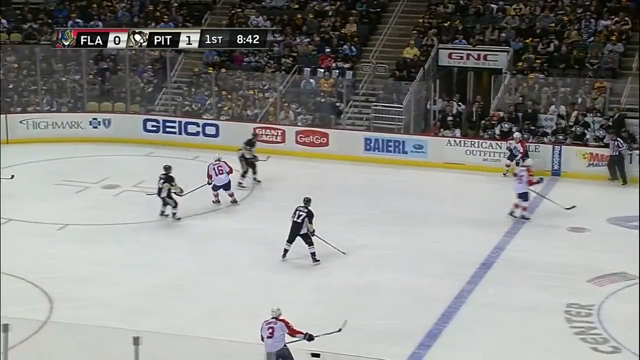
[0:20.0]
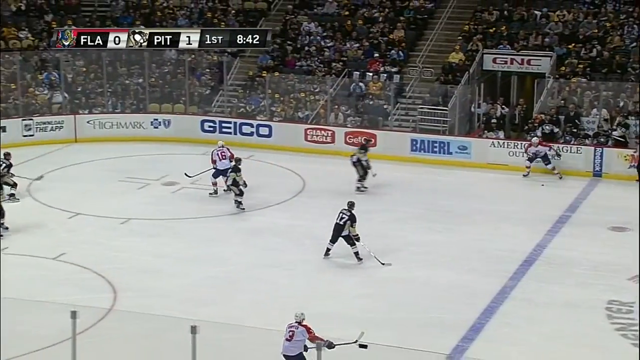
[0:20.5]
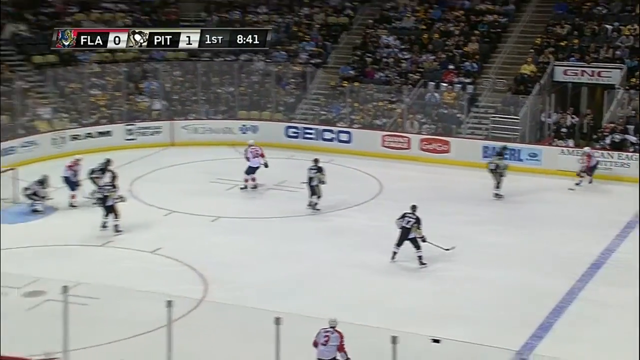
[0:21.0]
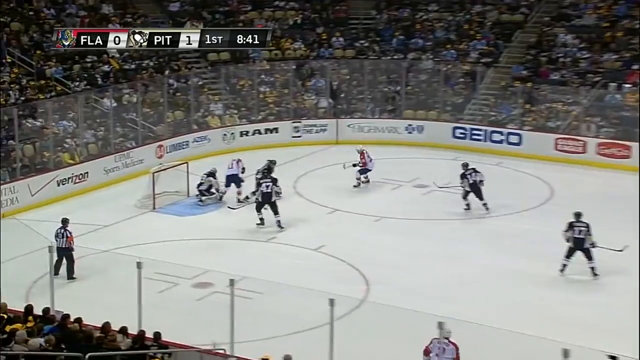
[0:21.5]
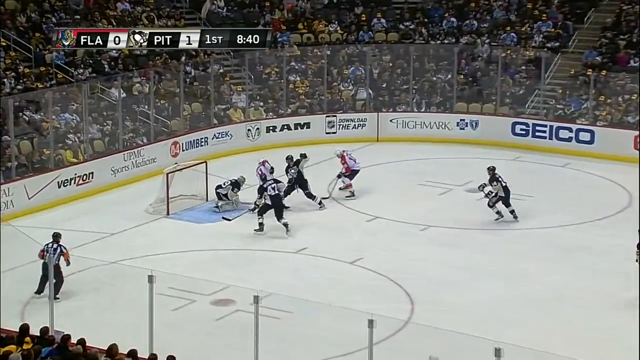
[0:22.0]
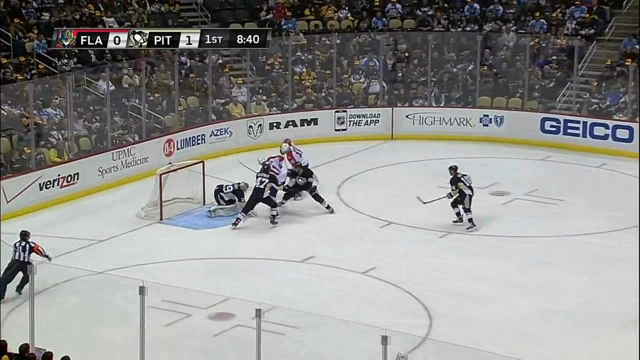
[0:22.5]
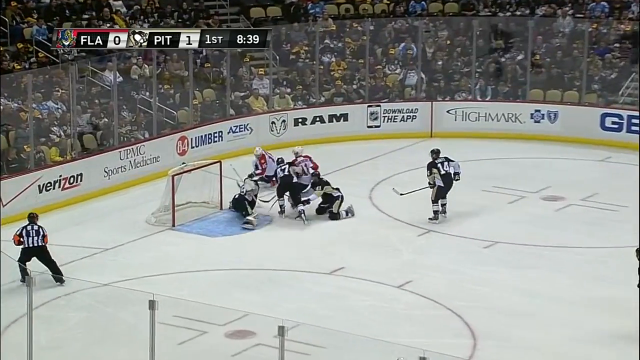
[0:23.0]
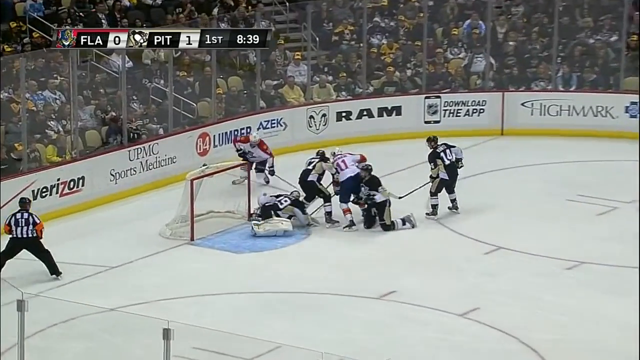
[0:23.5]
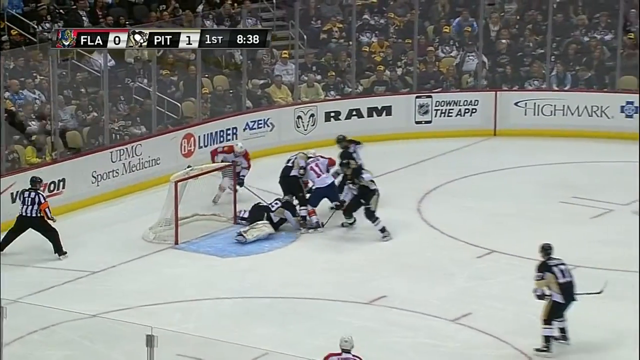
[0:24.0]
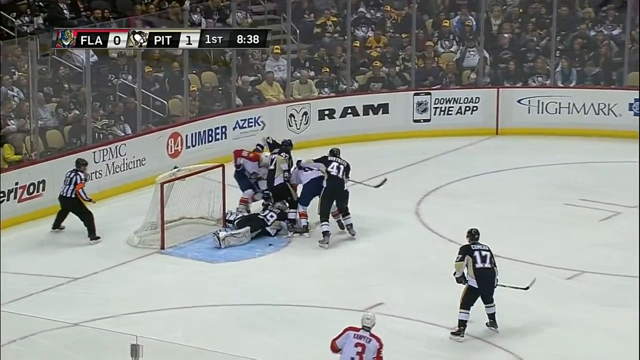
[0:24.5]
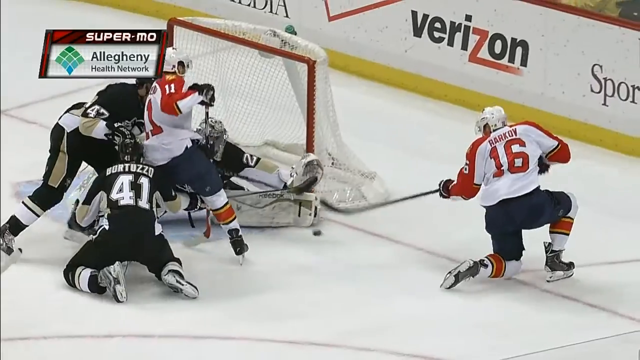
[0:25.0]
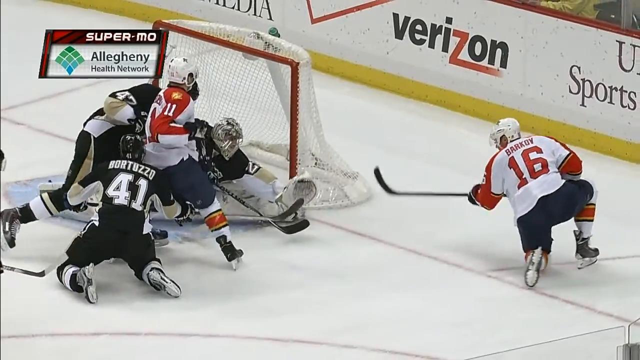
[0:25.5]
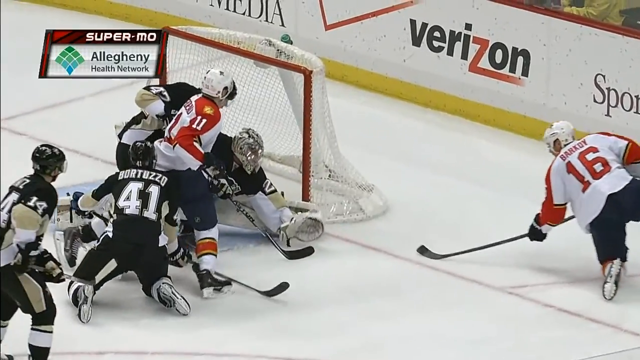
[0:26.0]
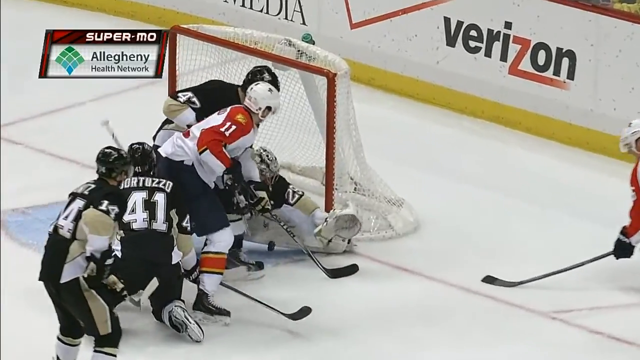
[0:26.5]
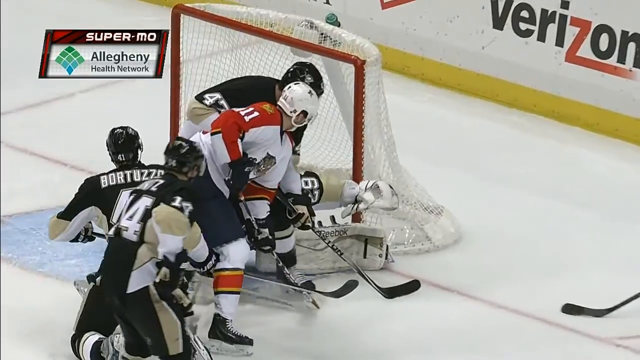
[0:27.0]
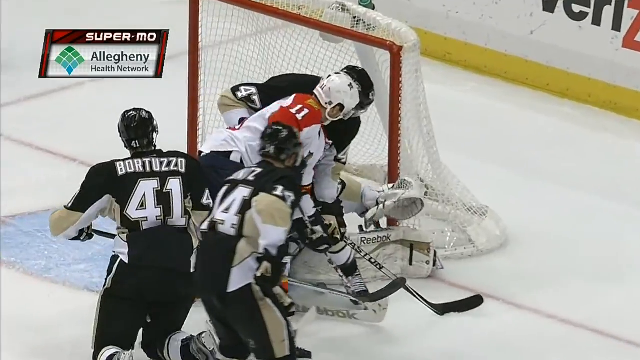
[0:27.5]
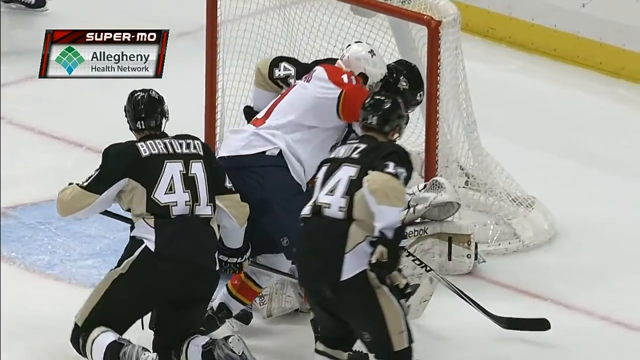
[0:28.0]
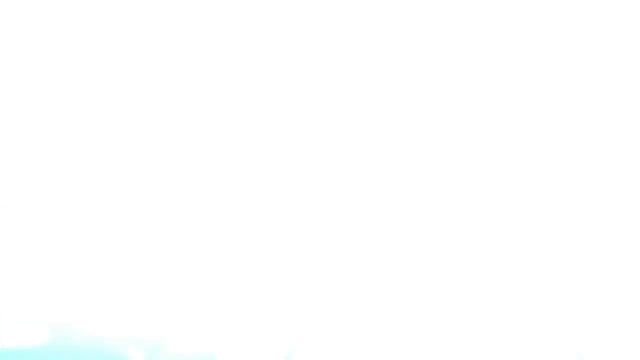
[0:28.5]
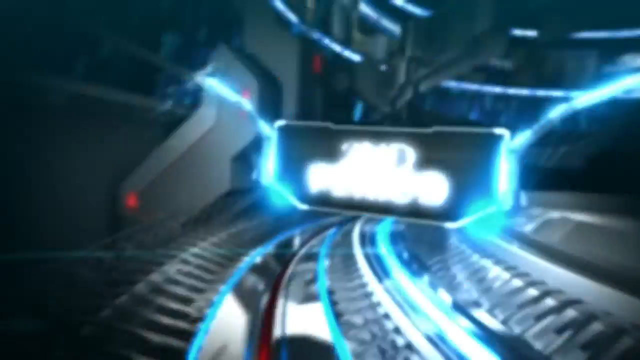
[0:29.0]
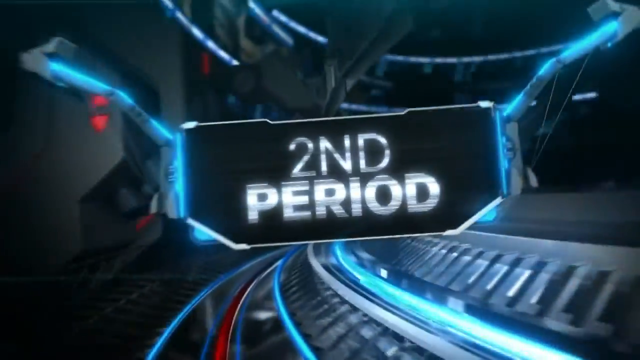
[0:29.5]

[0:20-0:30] Two teams play hockey inside the ground. The team in red and white has just scored a goal against the team in black, and the players in black are running, rushing to the ball. The ground is white and marked with circles drawn in red. Spectators watch from all over, and "RAM" and "Verizon" are written on the side inside the grounds. The ground is full of people cheering for the teams as they play.